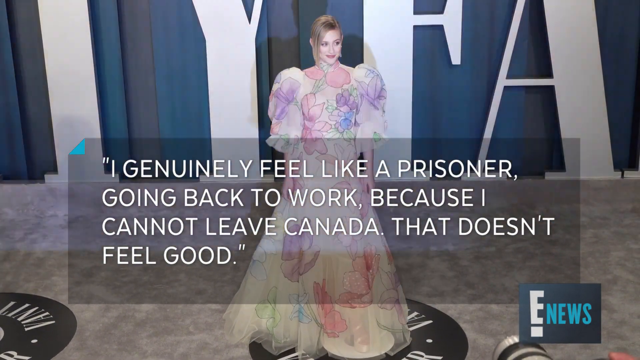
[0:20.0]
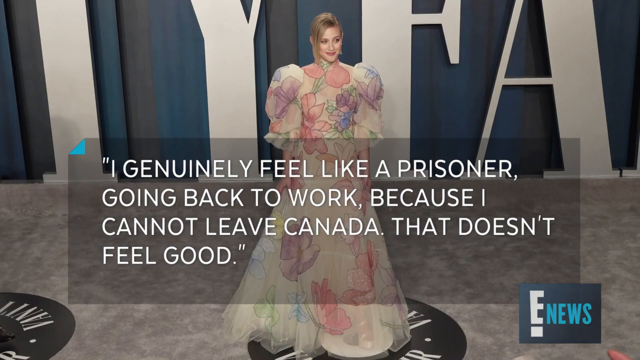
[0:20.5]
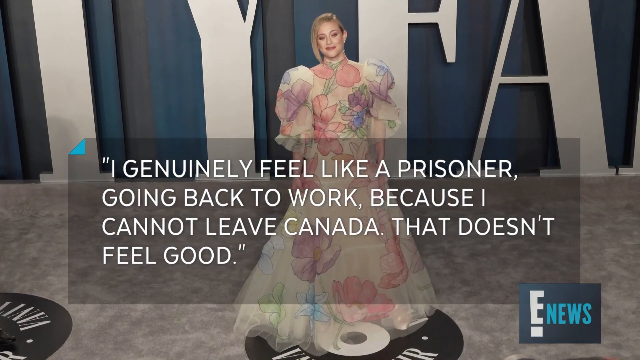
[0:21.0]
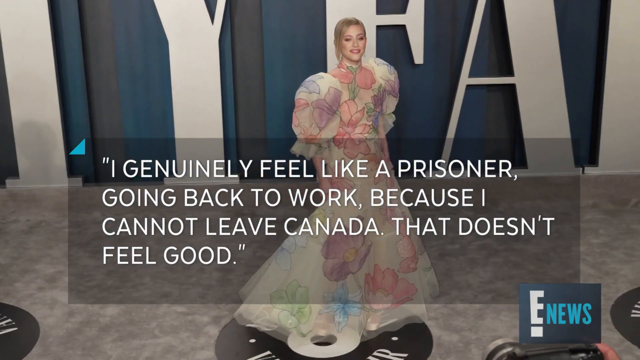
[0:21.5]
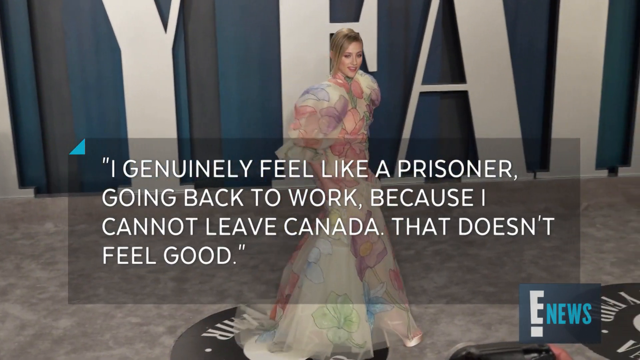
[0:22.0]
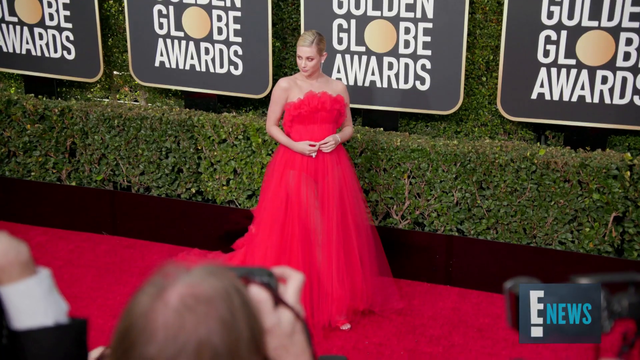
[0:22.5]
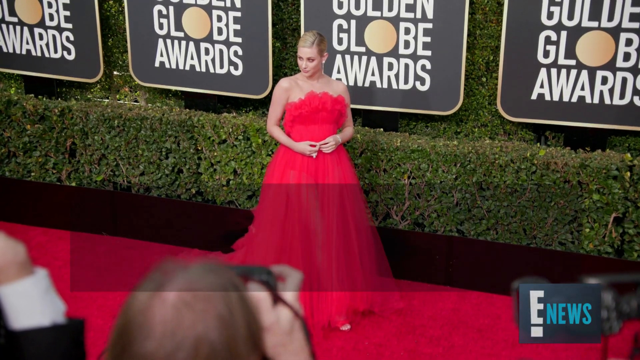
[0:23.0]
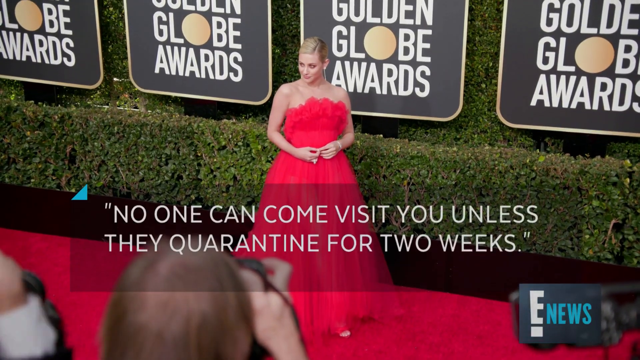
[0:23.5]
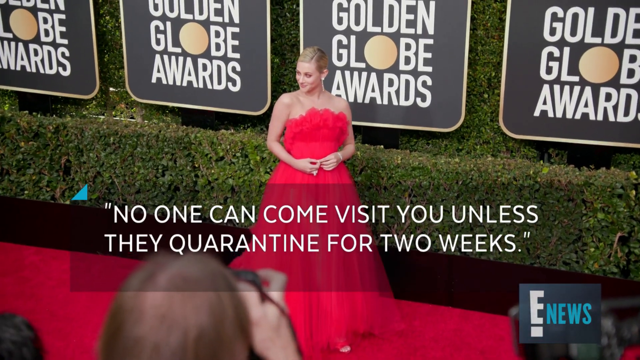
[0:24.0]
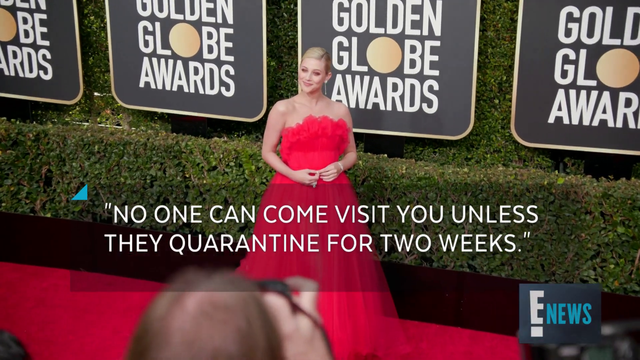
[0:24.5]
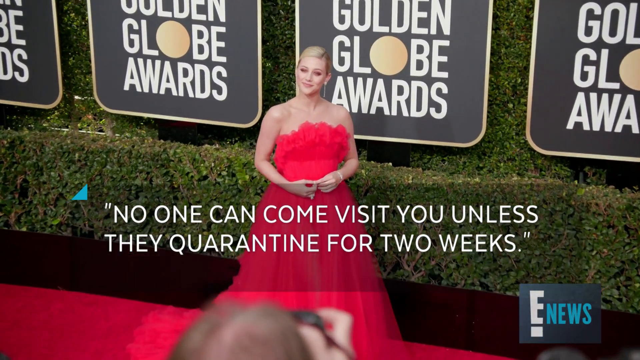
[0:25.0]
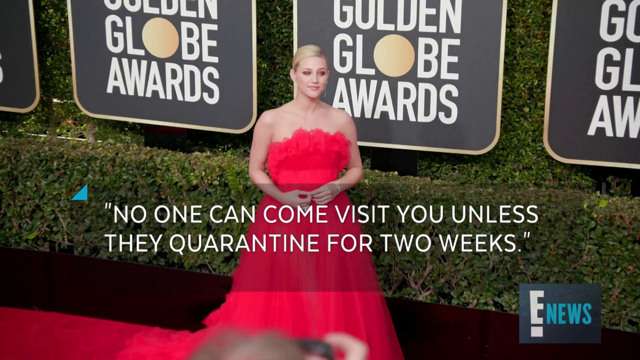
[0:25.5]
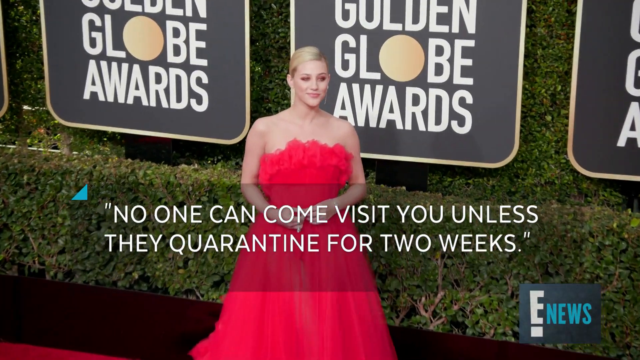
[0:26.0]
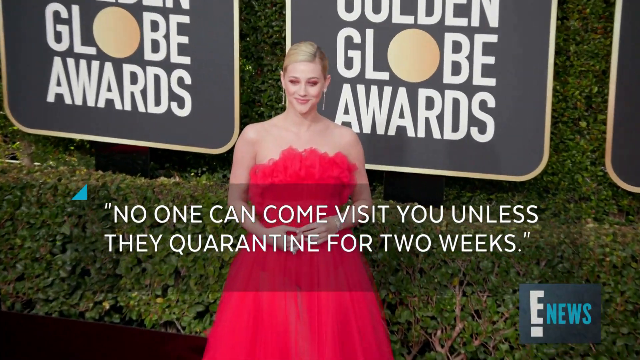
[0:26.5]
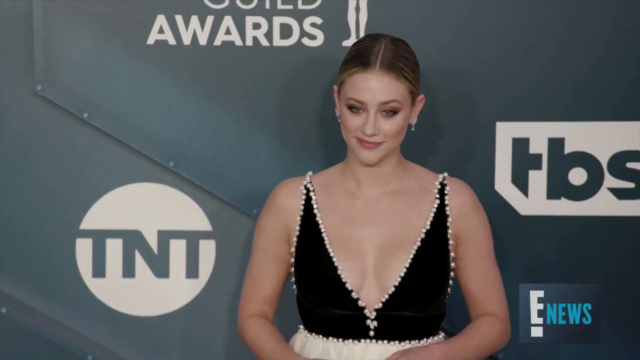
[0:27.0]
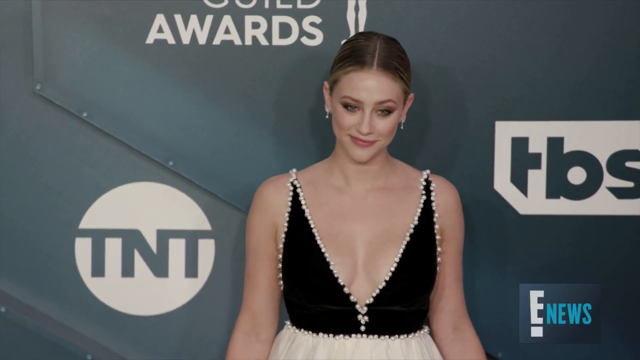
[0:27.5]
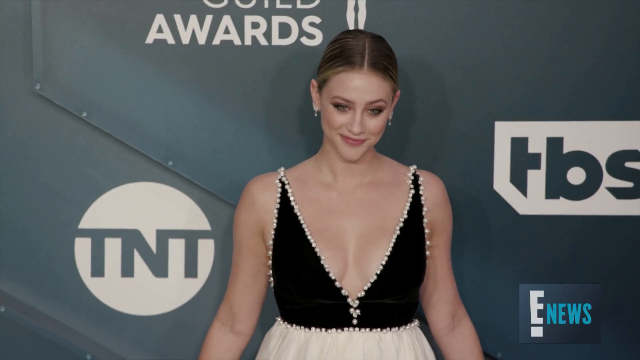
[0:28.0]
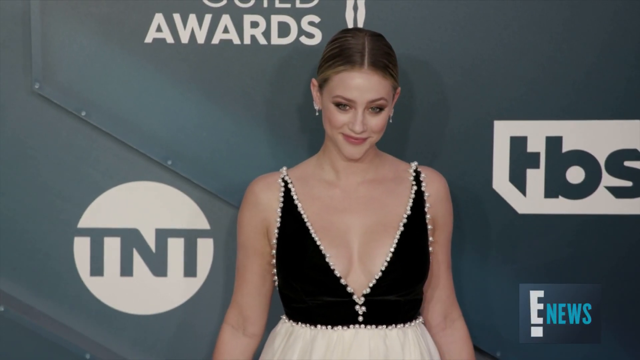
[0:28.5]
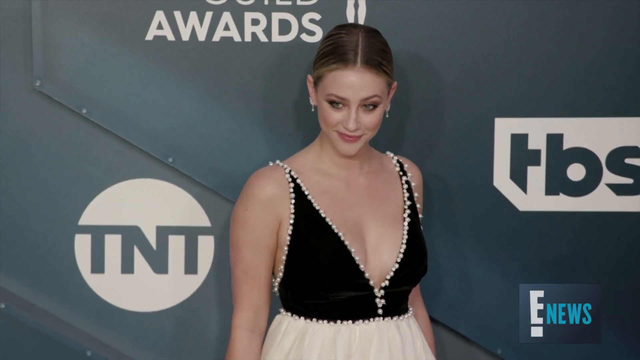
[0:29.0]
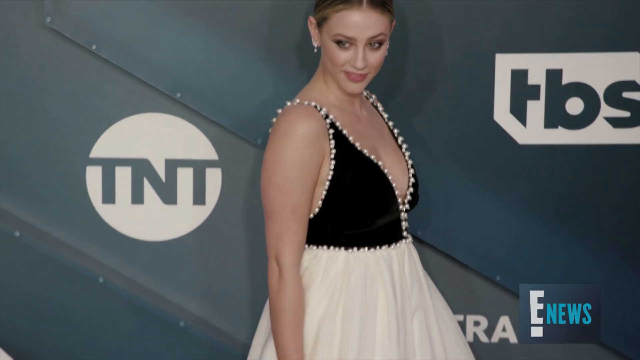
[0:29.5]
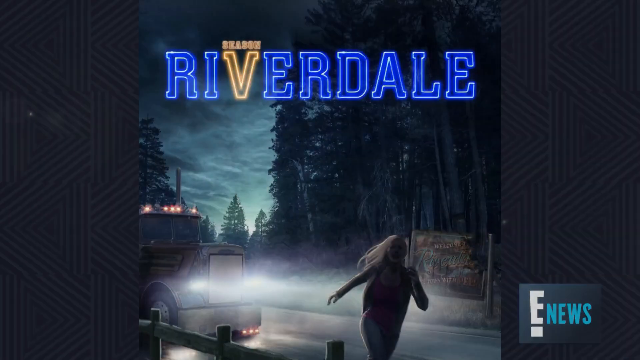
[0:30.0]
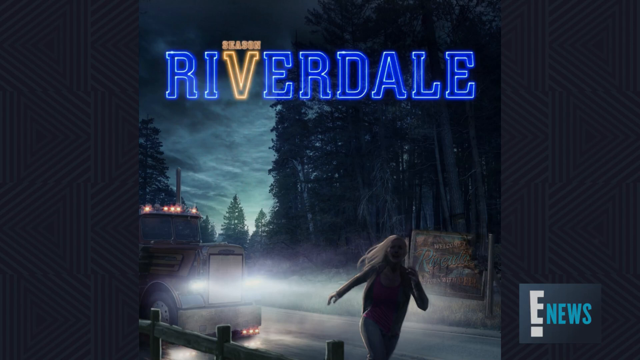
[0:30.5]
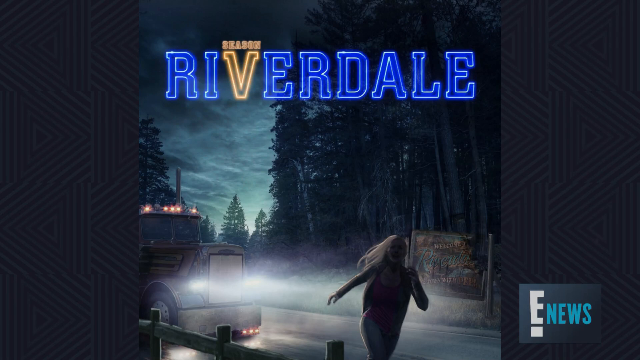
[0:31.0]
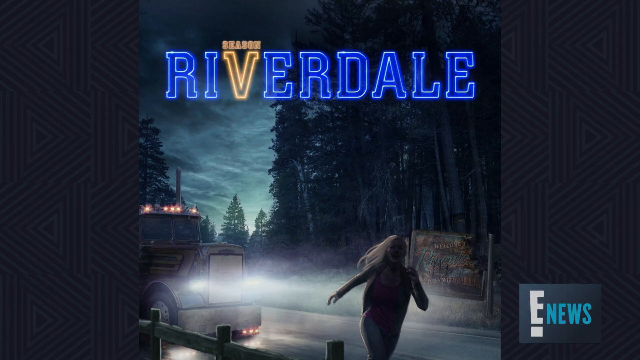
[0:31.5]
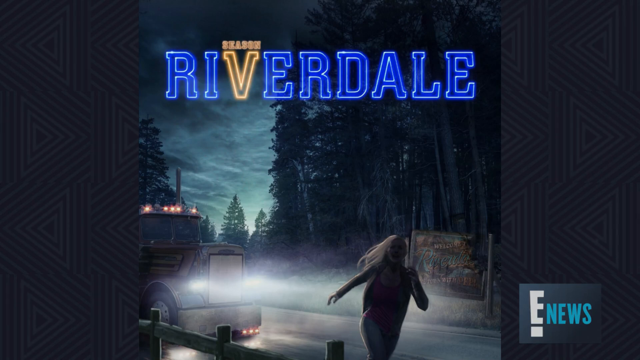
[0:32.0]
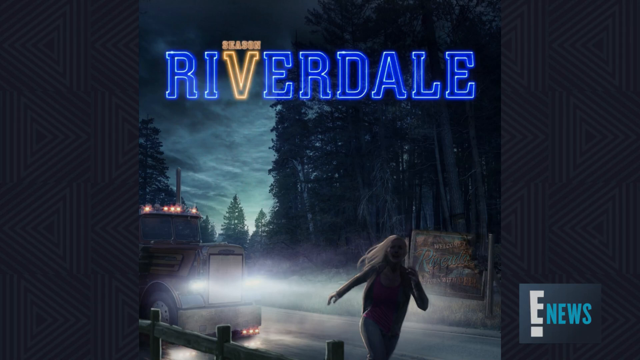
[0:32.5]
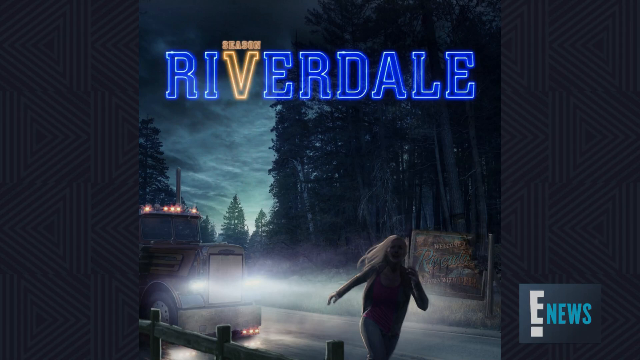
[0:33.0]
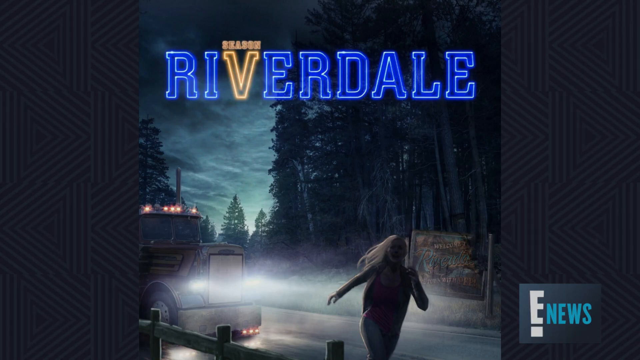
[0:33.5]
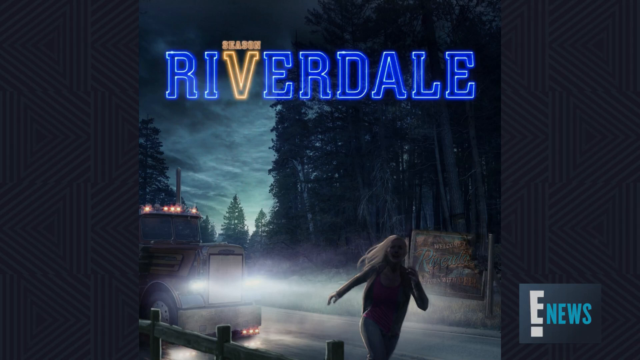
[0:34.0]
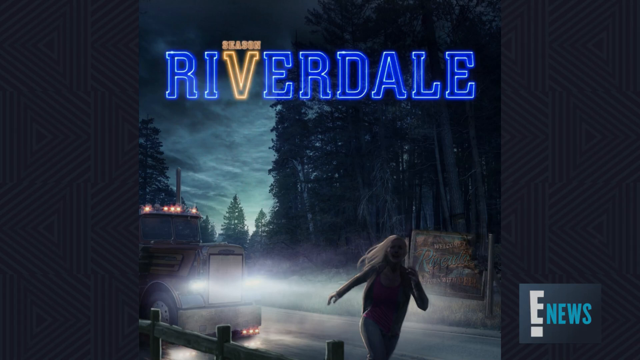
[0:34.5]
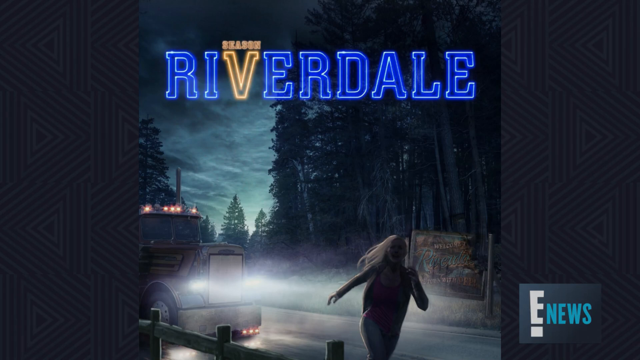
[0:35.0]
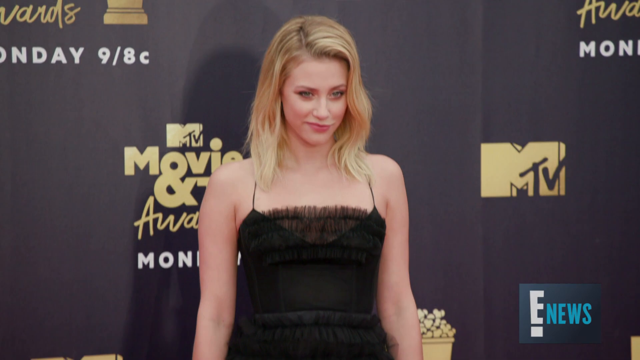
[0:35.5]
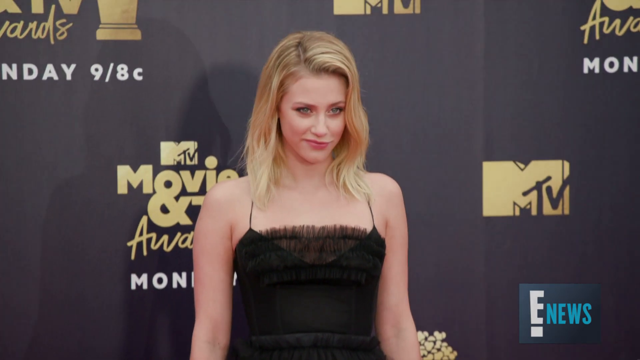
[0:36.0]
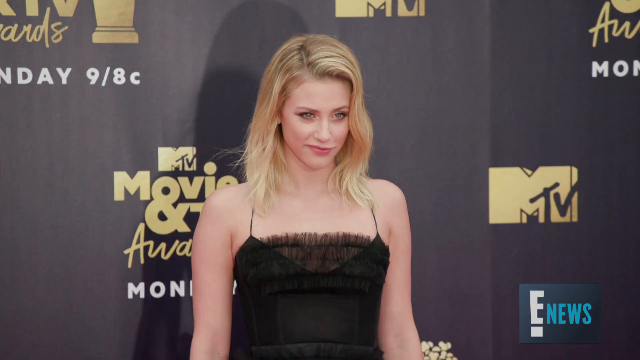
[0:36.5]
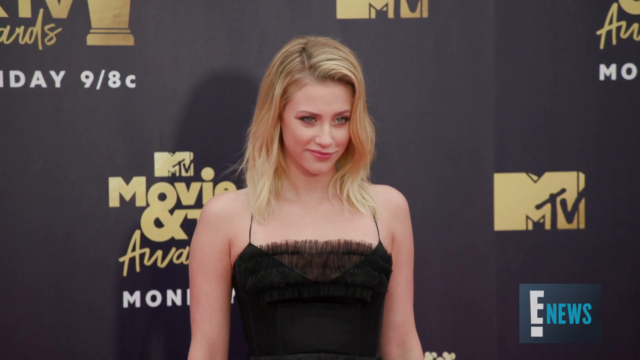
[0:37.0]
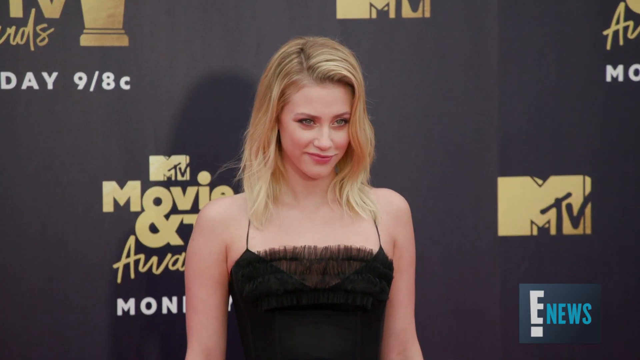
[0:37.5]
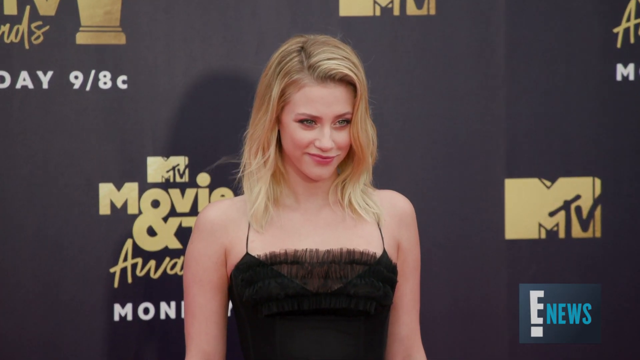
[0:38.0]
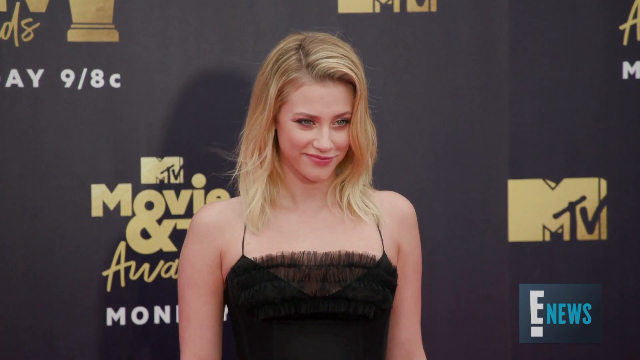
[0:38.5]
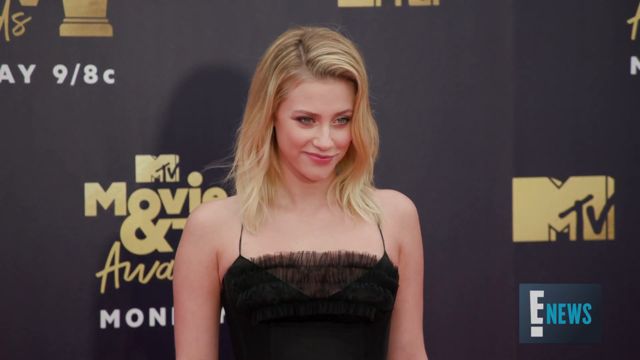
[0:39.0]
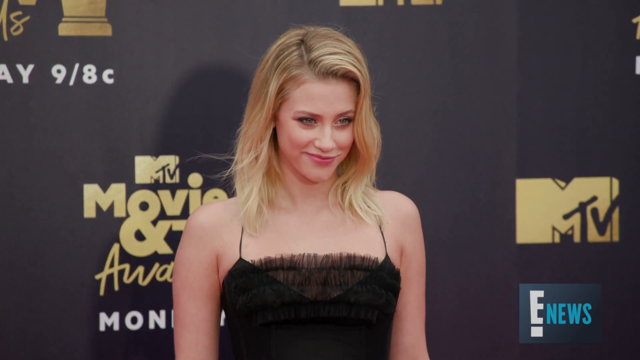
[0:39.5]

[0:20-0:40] The video continues to focus on Lily Reinhart, who is apparently an actress. A quote on the screen reads "I genuinely feel like a prisoner going back to work because I cannot leave Canada. That does not feel good." It is overlaid on an image of her wearing a very puffy dress with puffy sleeves and a puffy skirt section, with a logo behind her. She then appears to be at the Golden Globe Awards, where signs reading "Golden Globe Awards" are on top of what seems to be grass or hedges. She wears a strapless red ball gown, and another quote reads "now no one can come visit you unless they are quarantined for two weeks." She appears to be smiling and posing for photographs at this event. At another premiere or event, she wears a black gown with a plunging neckline and stands in front of logos for TNT and TBS while being photographed.